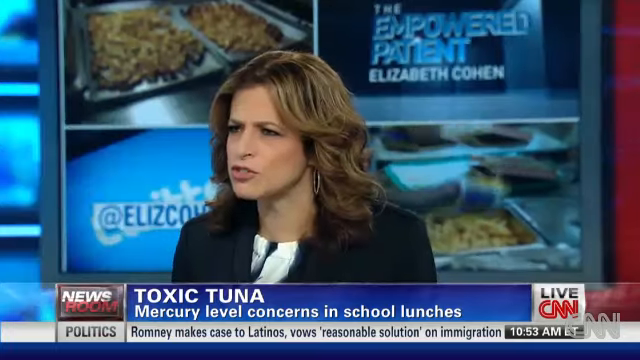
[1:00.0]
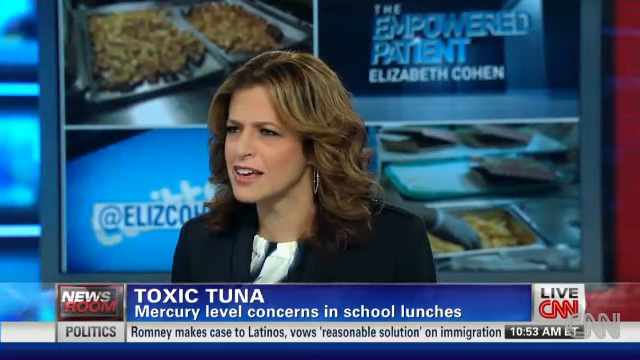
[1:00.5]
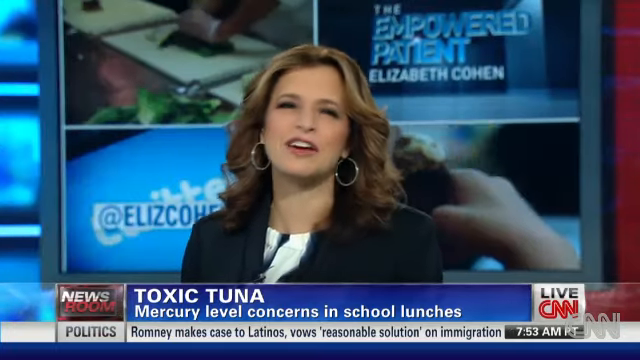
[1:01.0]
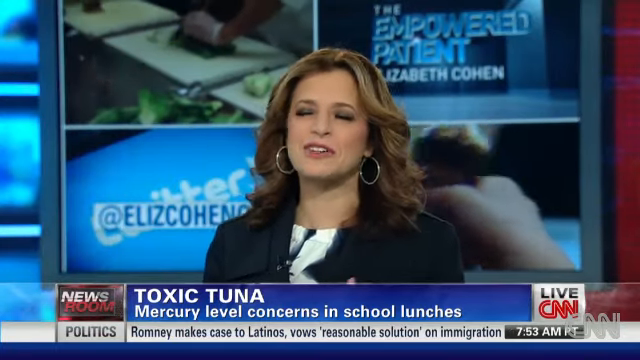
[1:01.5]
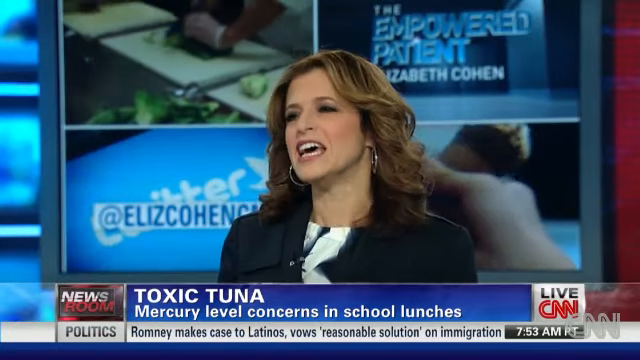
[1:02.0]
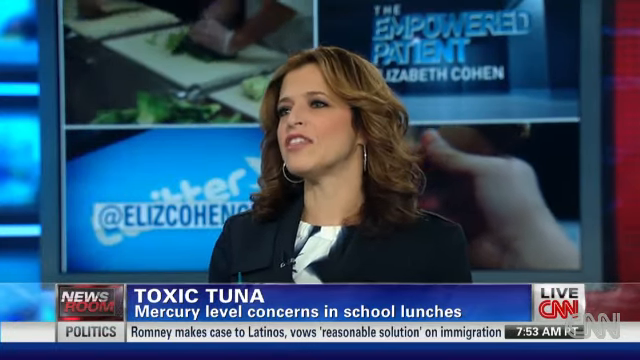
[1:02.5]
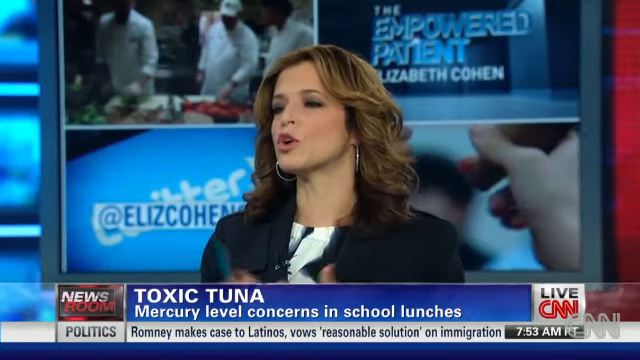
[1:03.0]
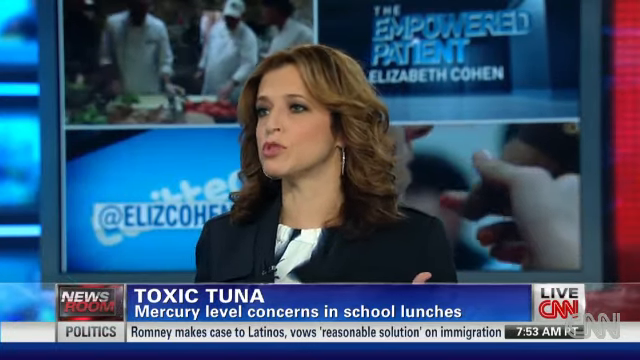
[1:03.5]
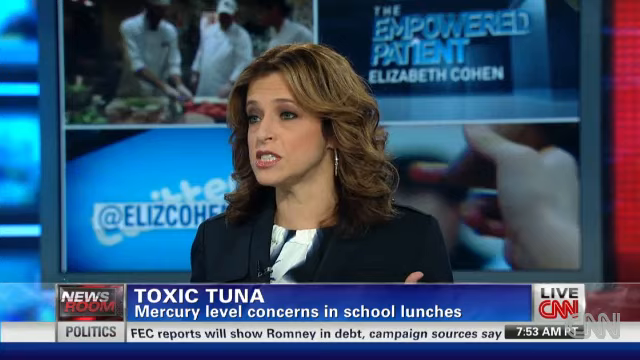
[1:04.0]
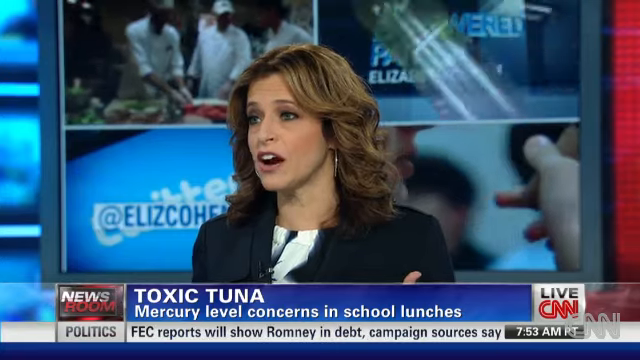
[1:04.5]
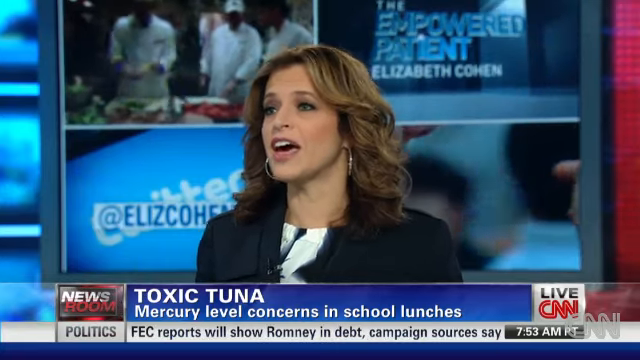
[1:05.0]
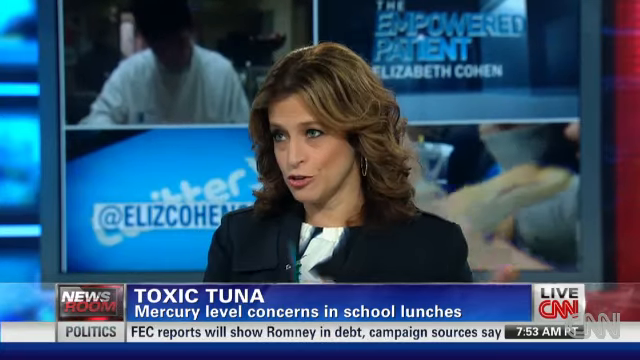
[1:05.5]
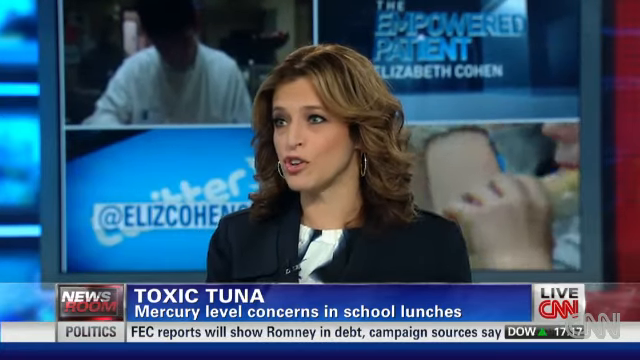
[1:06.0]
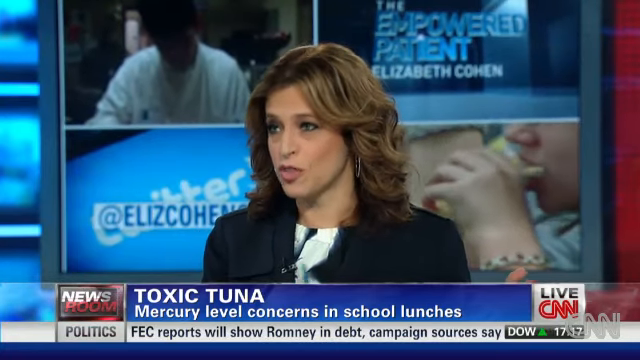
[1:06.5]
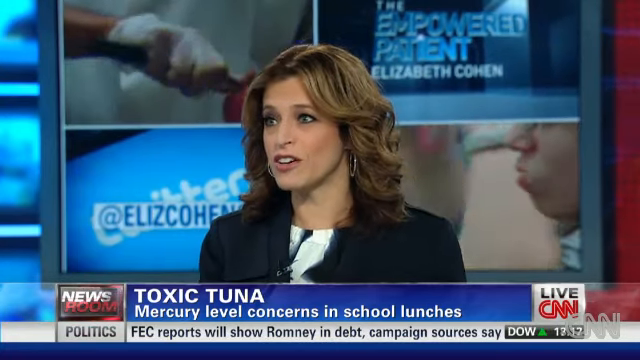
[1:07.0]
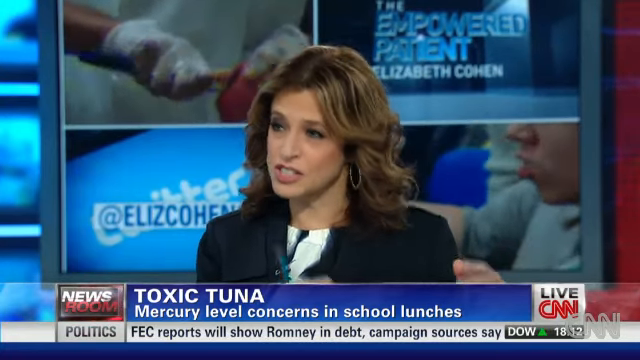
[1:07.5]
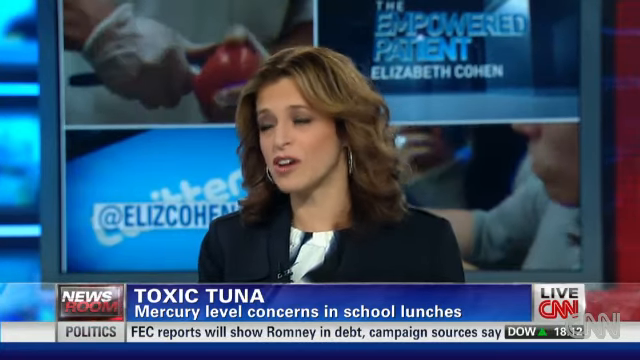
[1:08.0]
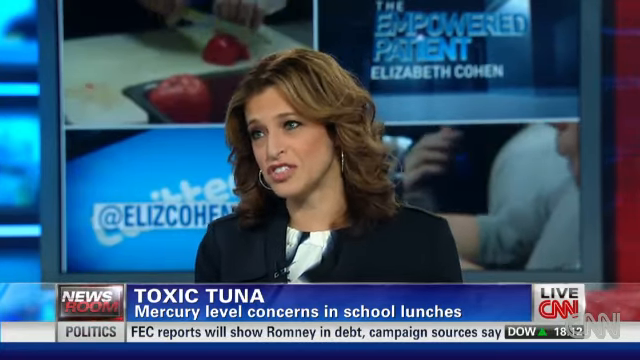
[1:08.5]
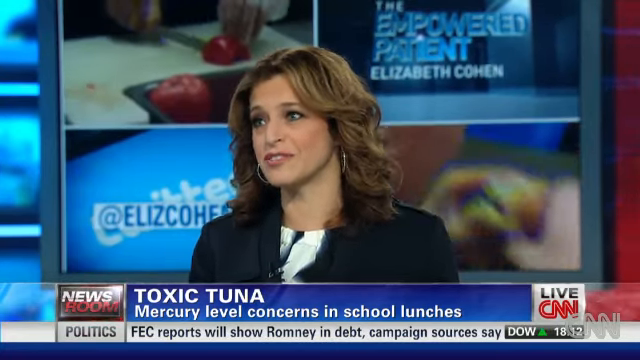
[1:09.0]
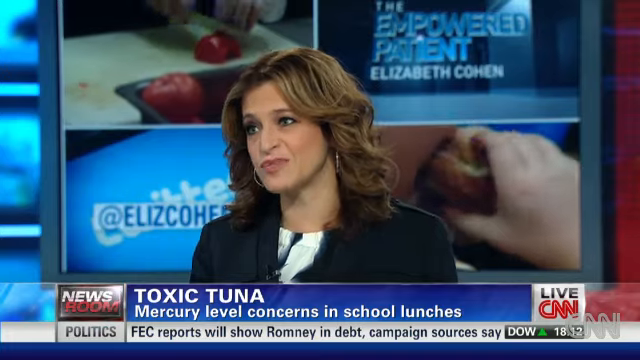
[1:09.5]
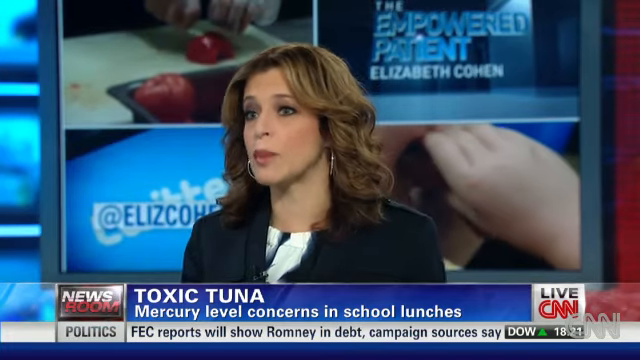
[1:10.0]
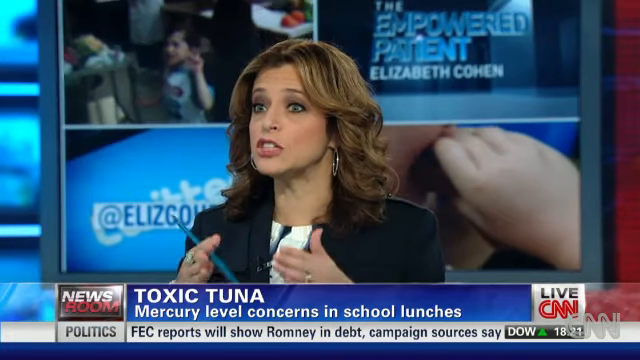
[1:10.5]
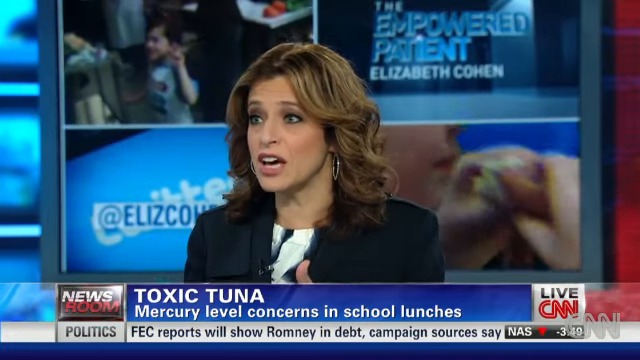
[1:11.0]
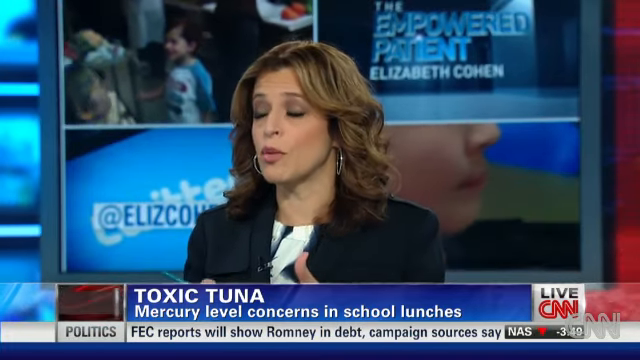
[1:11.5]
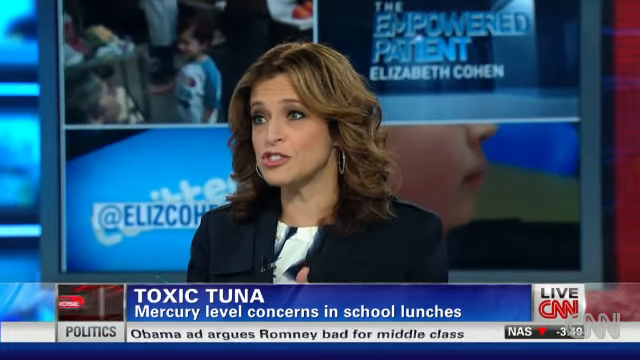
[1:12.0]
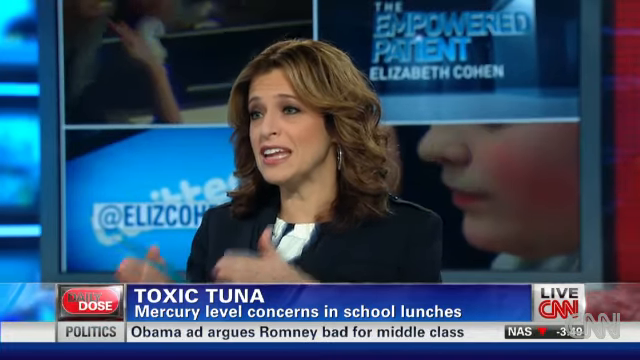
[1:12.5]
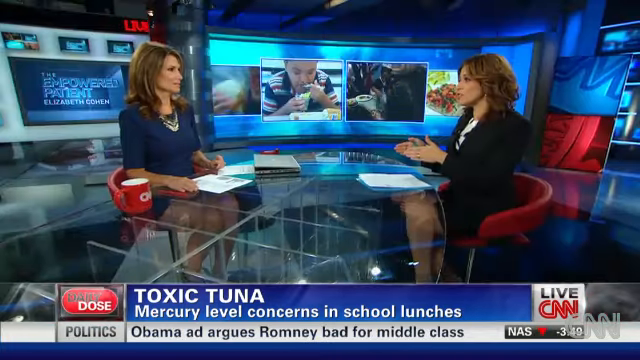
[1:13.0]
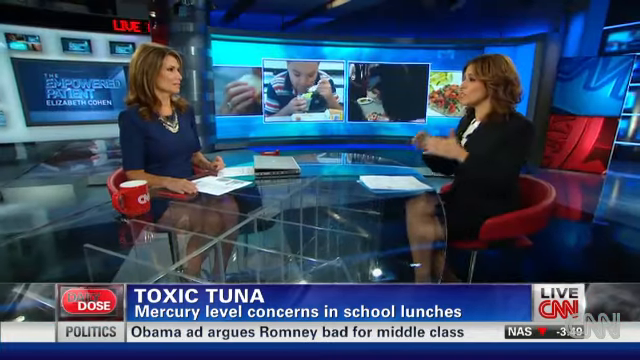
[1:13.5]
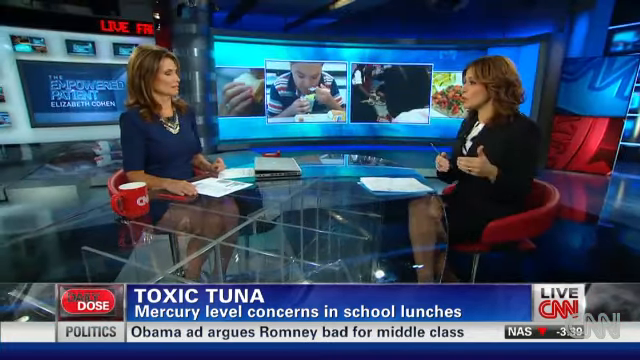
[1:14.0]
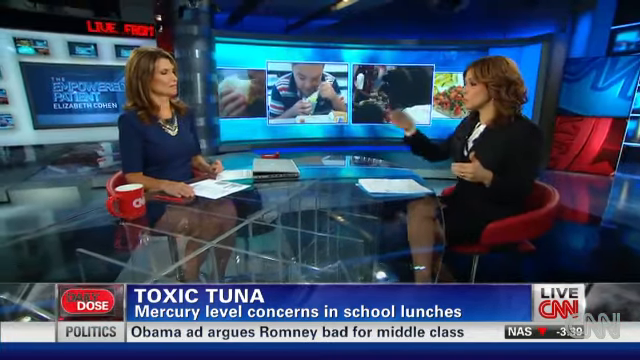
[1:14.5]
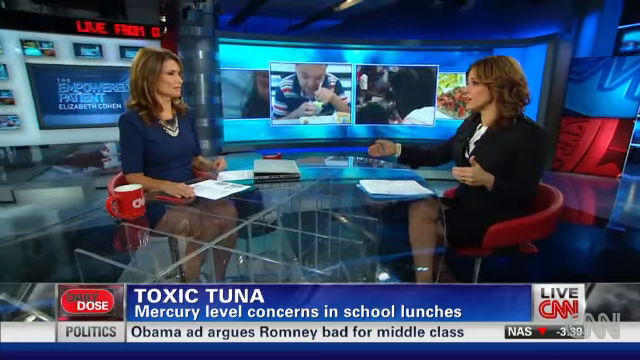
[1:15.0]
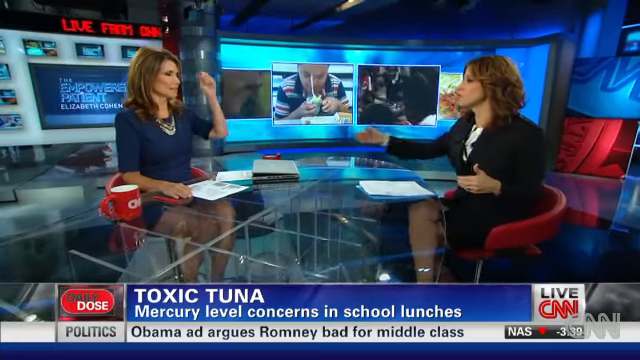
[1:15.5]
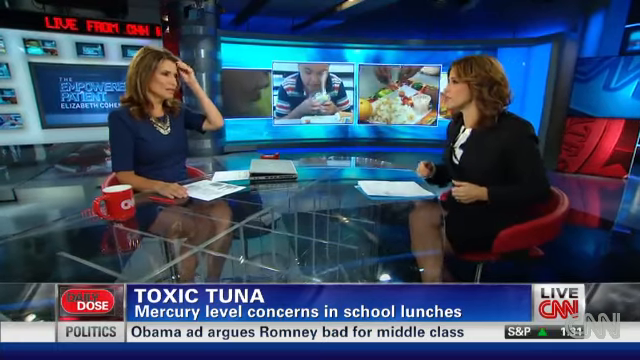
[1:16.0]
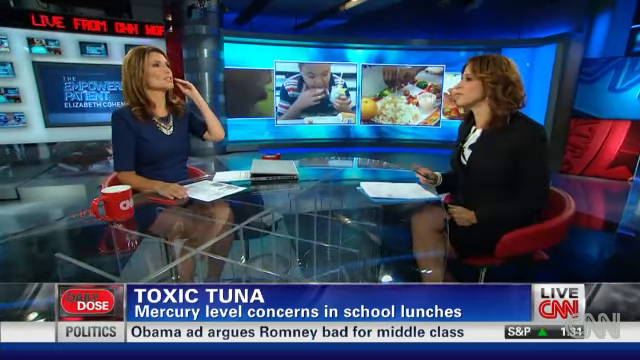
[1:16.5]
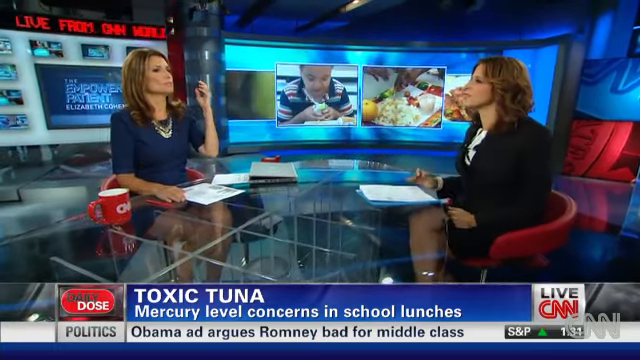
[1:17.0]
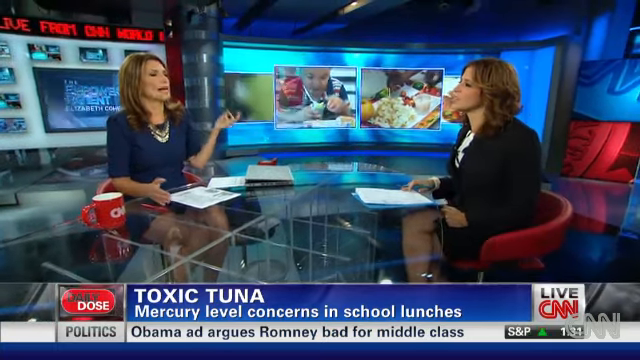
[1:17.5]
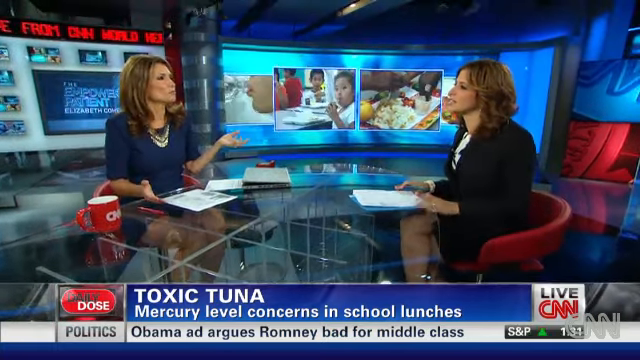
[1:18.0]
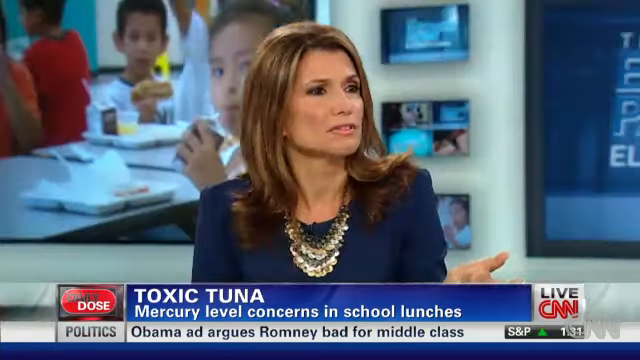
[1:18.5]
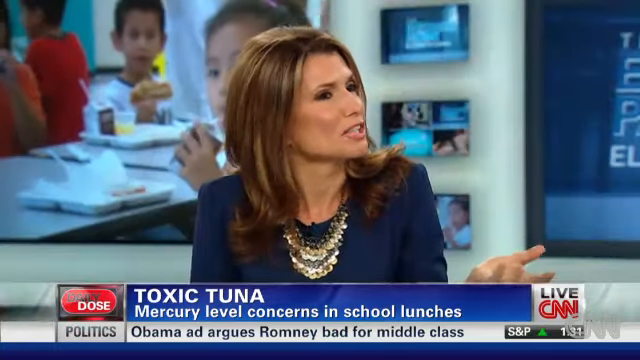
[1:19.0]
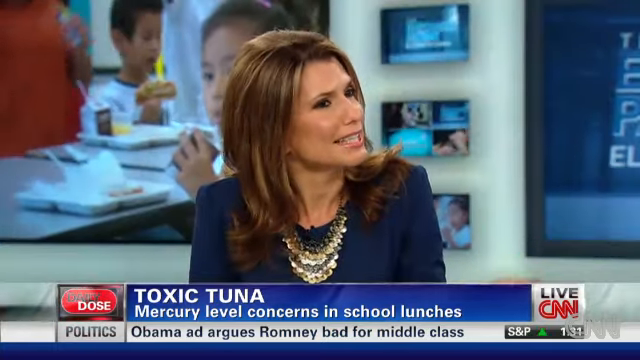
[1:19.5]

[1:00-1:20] "Toxic tuna mercury level concerns in school lunches" is shown, and a woman is talking and wildly gesticulating, with four clips behind her showing people working. It looks like the series is Empowered Patient with Elizabeth Cohen. More images appear in the middle, and the woman looks very puzzled.